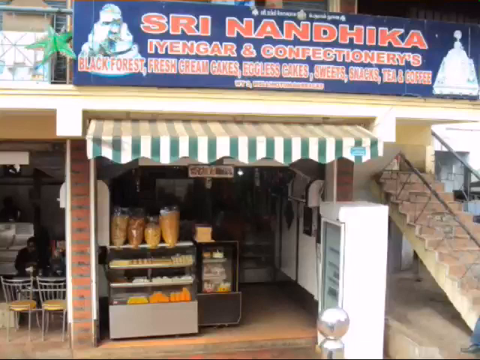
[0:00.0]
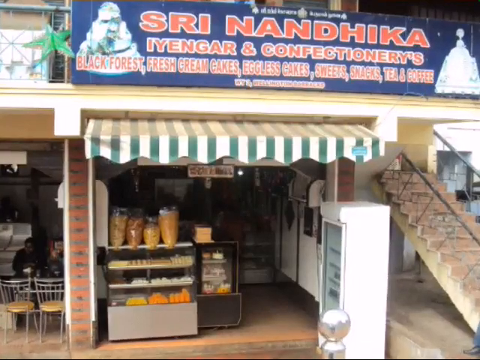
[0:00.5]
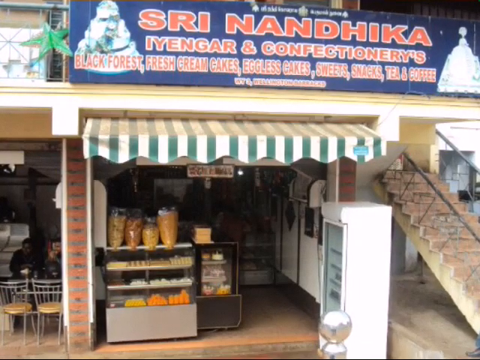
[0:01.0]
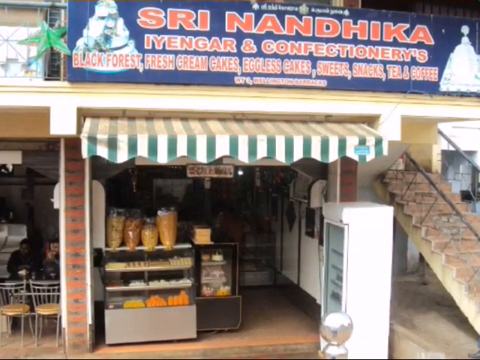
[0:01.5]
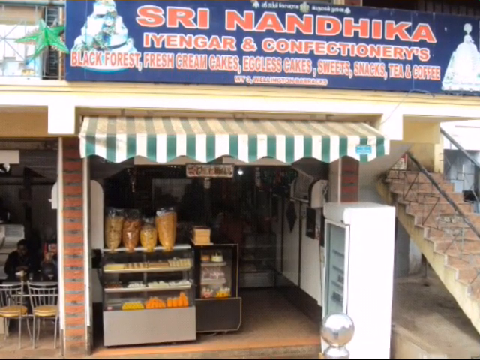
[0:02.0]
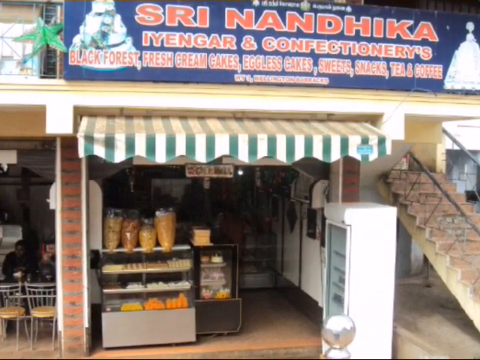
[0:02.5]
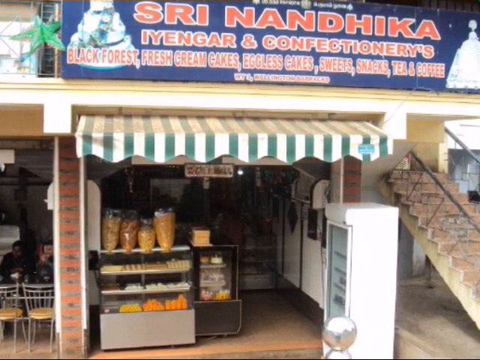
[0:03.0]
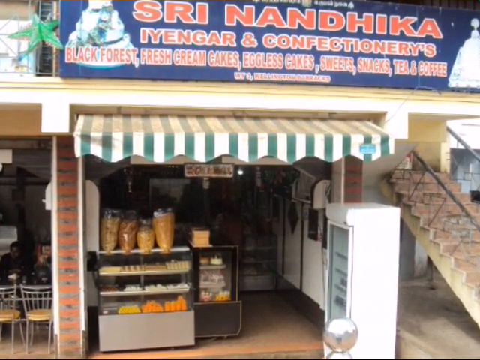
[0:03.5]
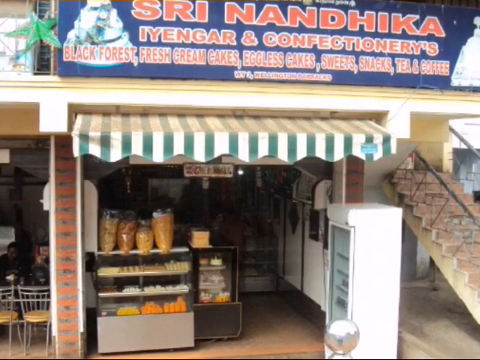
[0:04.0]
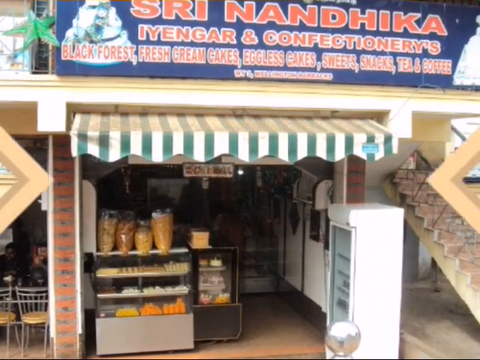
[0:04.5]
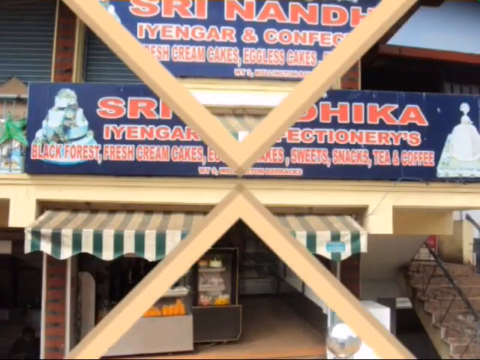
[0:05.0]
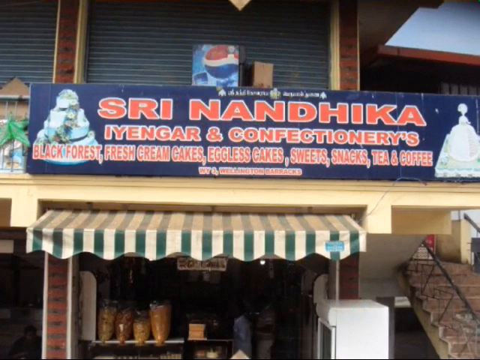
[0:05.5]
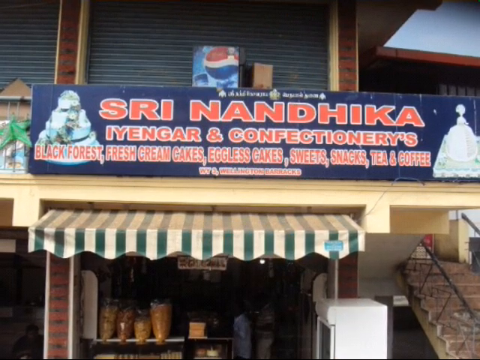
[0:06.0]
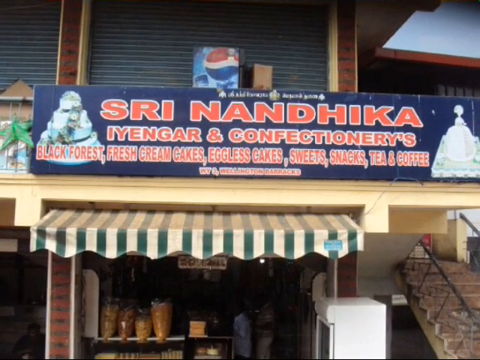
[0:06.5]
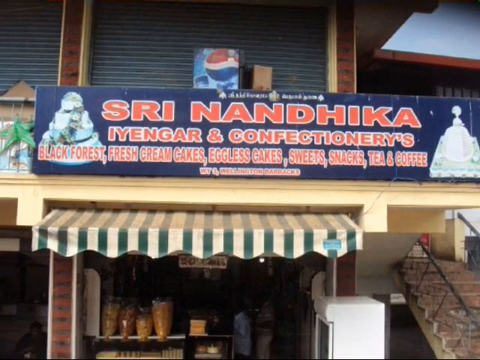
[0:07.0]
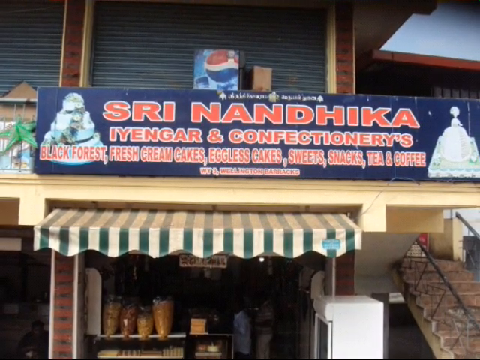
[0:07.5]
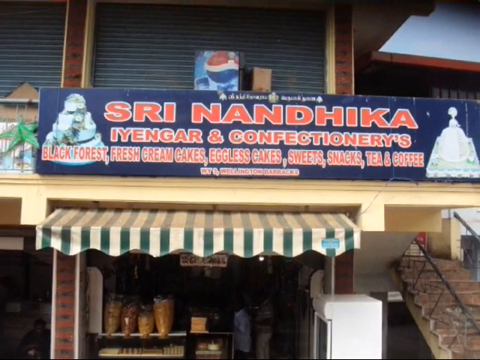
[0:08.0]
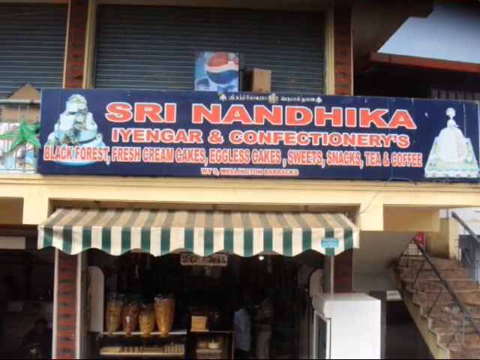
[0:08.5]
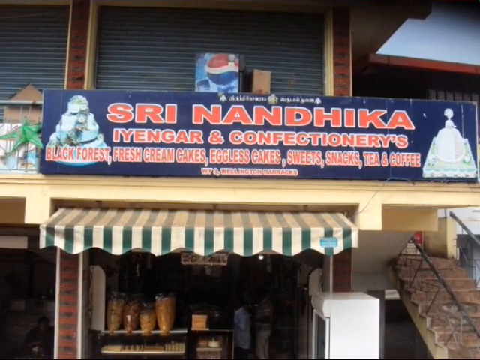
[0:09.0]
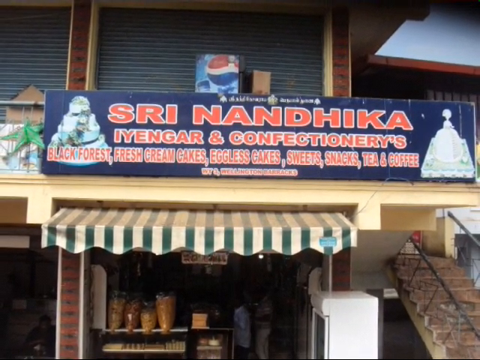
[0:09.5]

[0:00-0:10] The video shows what looks like the exterior of a shop. Above the shop, in red text on a blue background, are the words "Shri Niggitas Confectionaries" and the text "black forest, fresh cream cakes, eggless cakes, sweets, snacks, tea and coffee". There is also an image of what looks like cakes and another image that could be either a cake or a room with a very large, wide dress. The picture is a still image that the view zooms in on and then zooms out of. A green-and-white striped canopy cover comes out from the entrance. Inside there appear to be fridges and perhaps a cabinet that keeps things warm. To the left of the shop, somebody can just about be made out sitting at a table, perhaps at a different restaurant or cafe next door. Above the shop in the photograph are shutters, or something that looks like shutters, and what looks like a Pepsi machine of some sort, with red, white and blue visible in front of it.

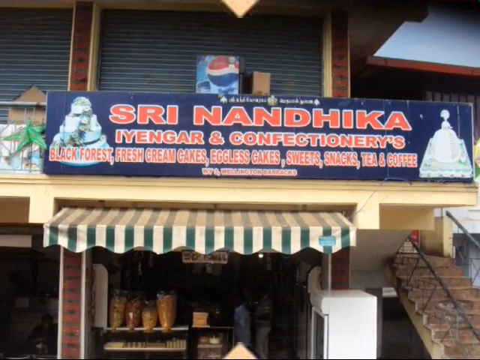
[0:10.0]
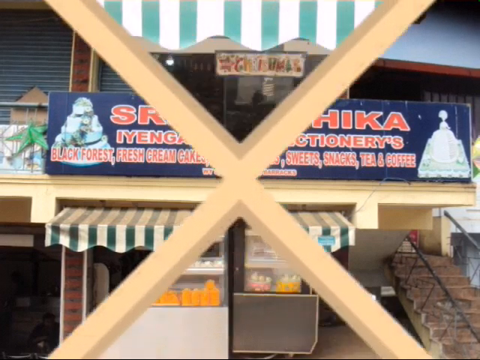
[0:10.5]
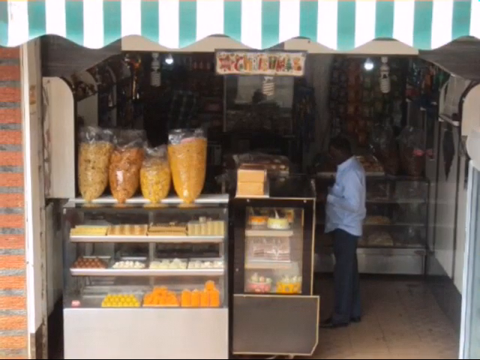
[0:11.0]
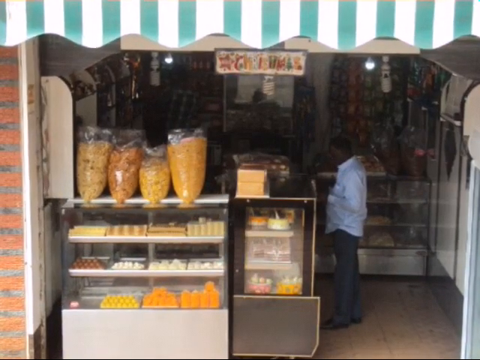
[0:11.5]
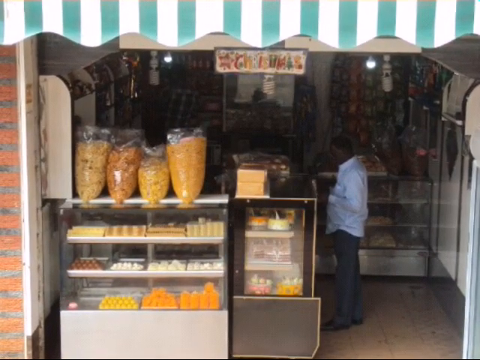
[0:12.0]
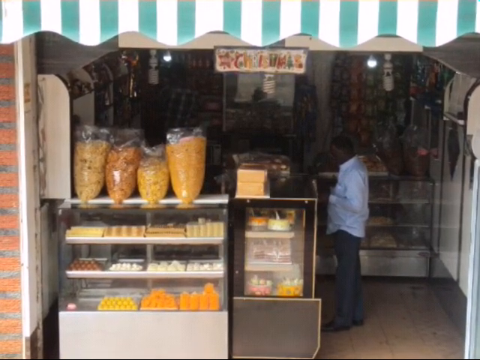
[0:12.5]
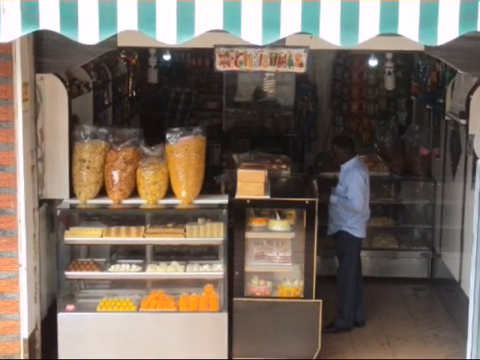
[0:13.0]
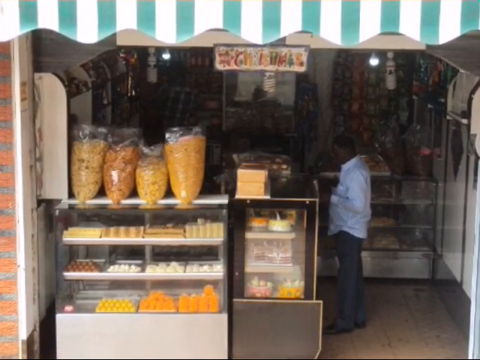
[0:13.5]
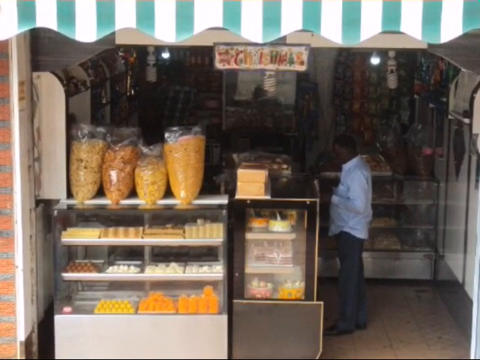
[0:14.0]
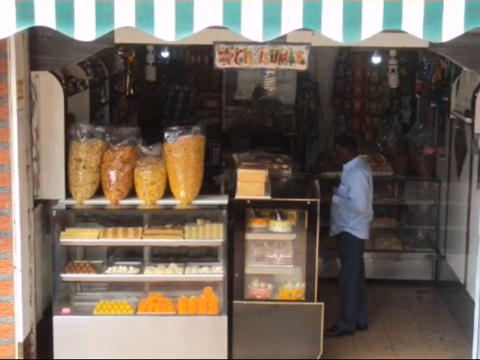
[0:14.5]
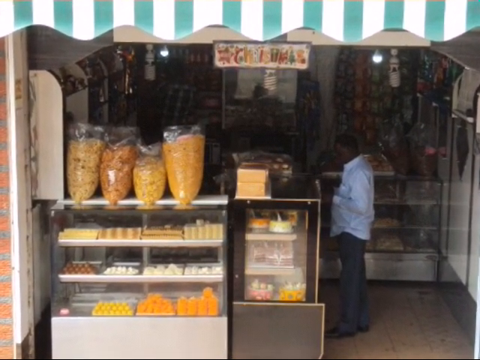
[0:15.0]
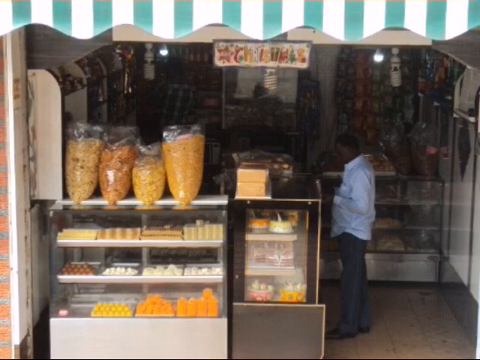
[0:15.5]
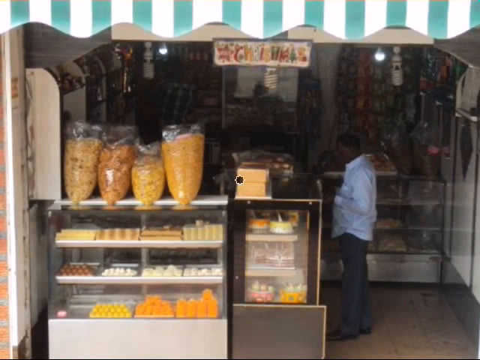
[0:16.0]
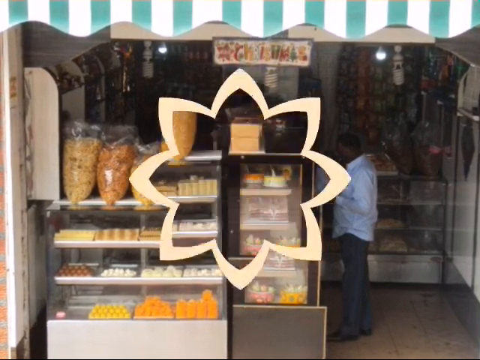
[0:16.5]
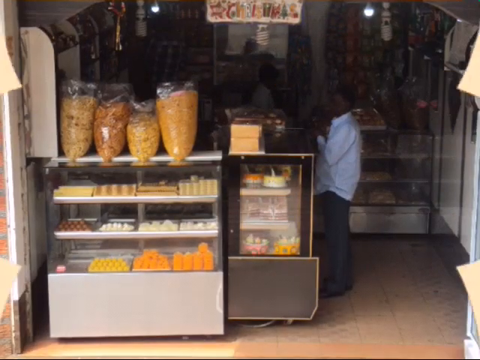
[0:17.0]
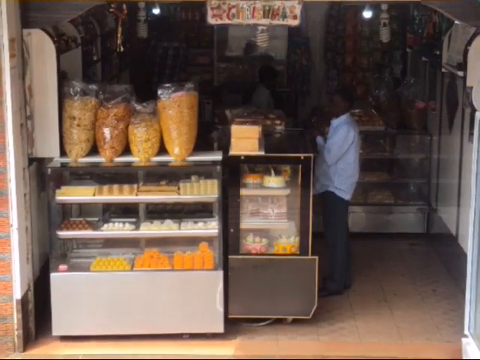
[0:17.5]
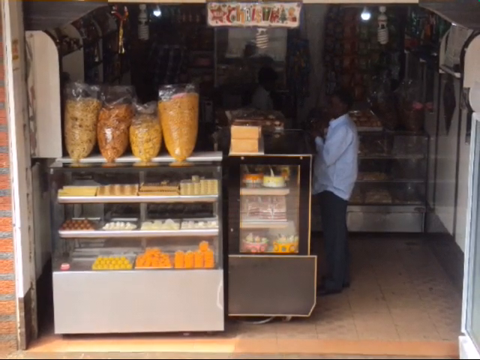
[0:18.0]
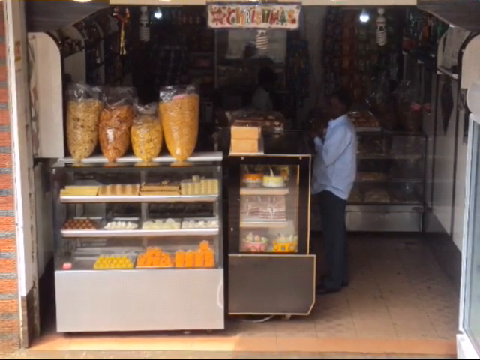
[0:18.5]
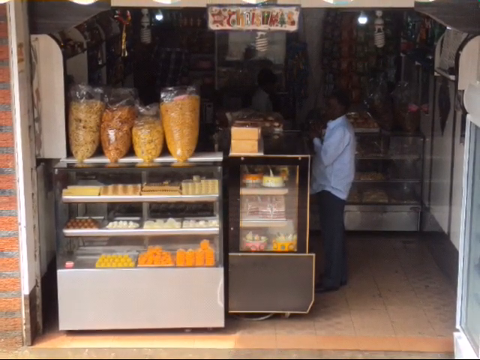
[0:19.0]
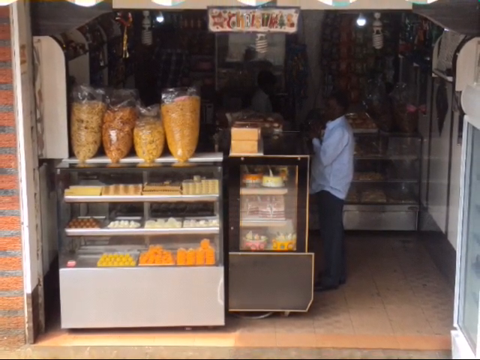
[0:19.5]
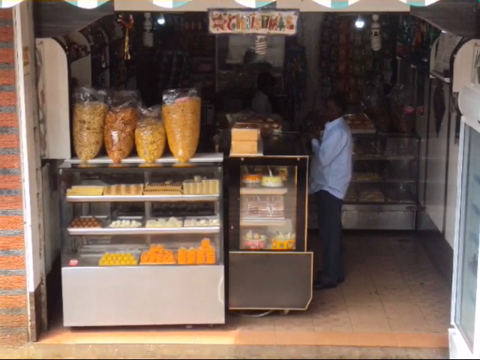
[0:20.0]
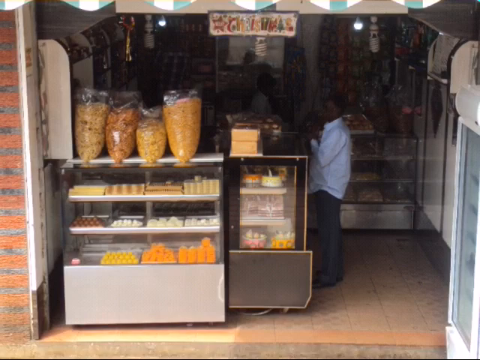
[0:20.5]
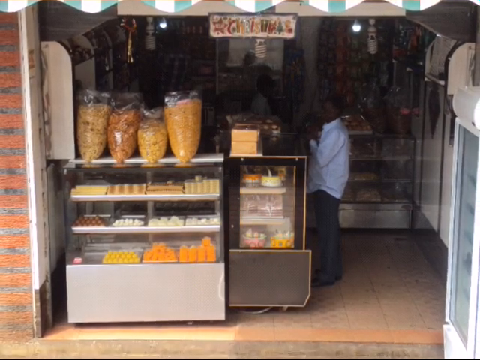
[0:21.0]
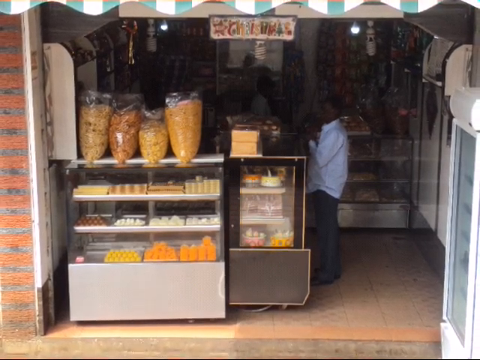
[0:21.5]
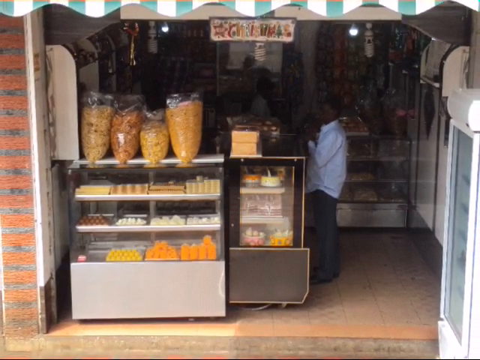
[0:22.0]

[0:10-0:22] The view cuts from a medium shot of the exterior of the confectionery shop to a closer, but still medium, shot of the shop, showing more of the inside. Lots of confectionery products appear to be hanging up around the walls. There are several translucent cabinets that could perhaps be coolers or heated cabinets keeping food warm, and through the glass many different coloured confection items are visible inside: yellows, oranges, black chocolate-looking things, white chocolate-looking things, and perhaps packets of popcorn or other more savoury snacks. There are lots of colours, including reds, blues and greens. A man wearing a shirt and trousers stands at what looks like a counter; from the still image it is unclear whether he is buying something or working at the shop.